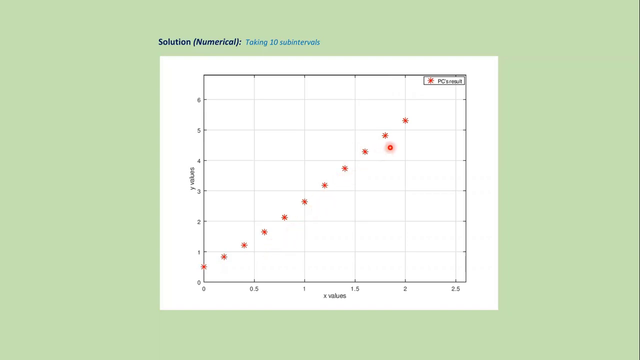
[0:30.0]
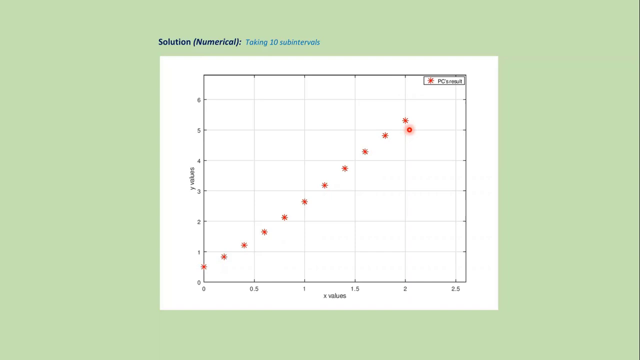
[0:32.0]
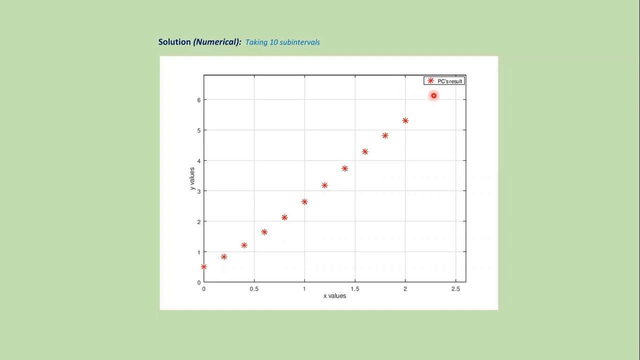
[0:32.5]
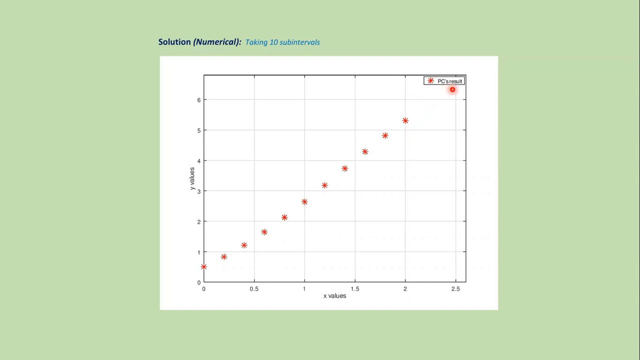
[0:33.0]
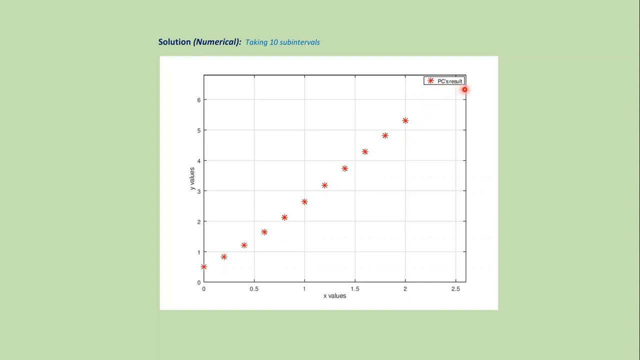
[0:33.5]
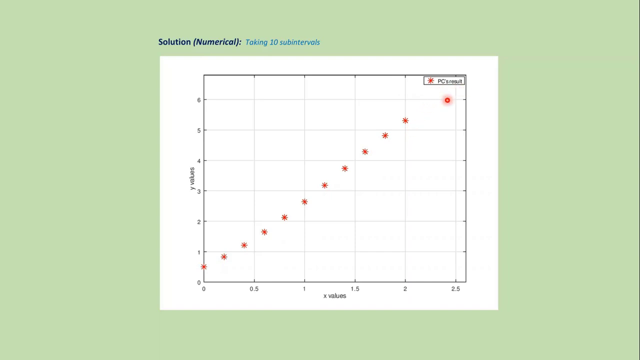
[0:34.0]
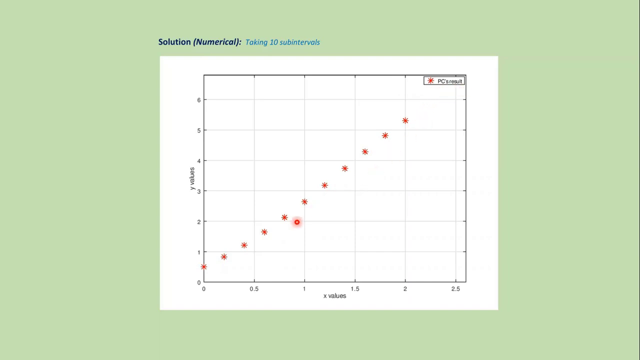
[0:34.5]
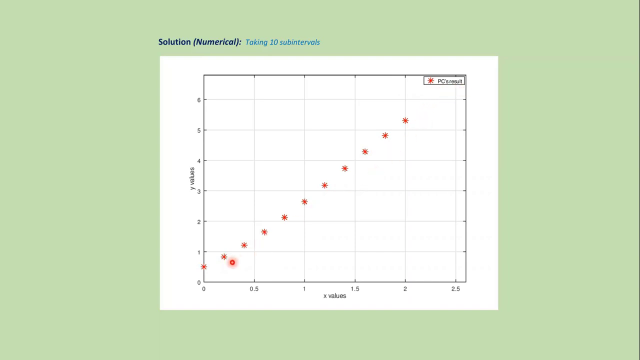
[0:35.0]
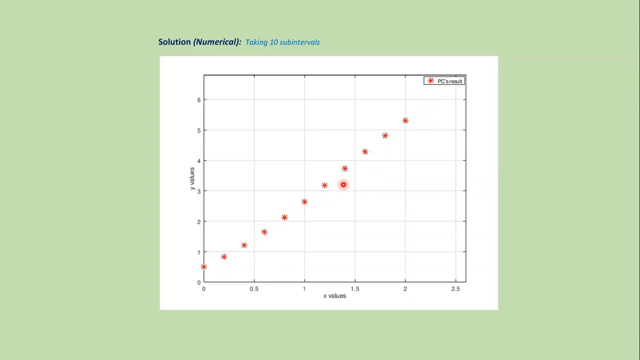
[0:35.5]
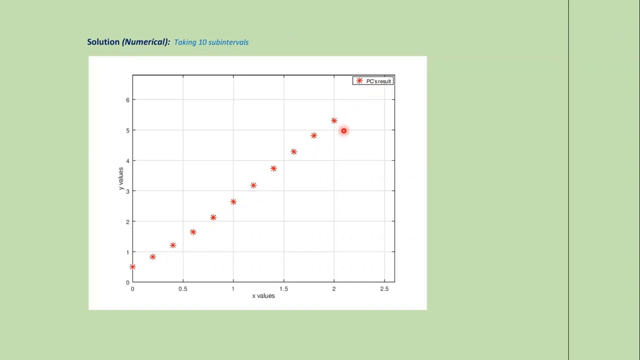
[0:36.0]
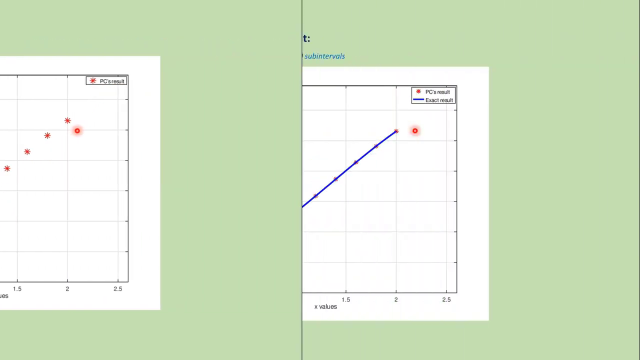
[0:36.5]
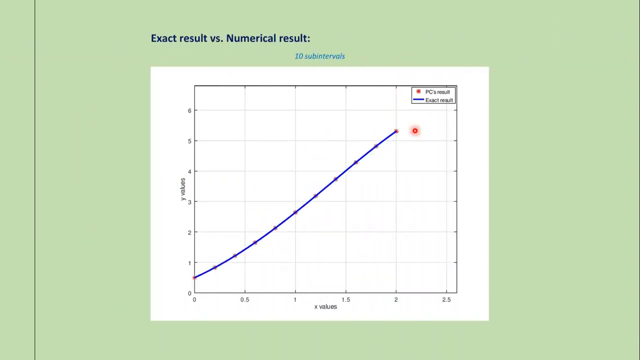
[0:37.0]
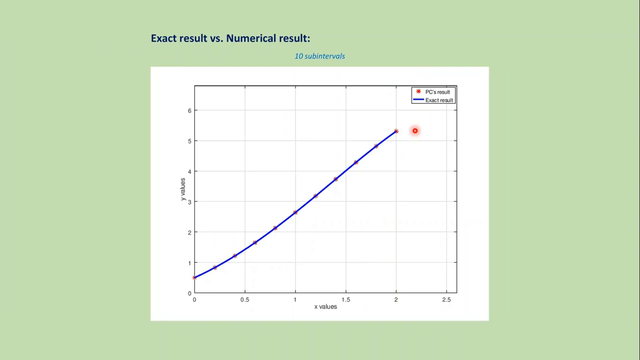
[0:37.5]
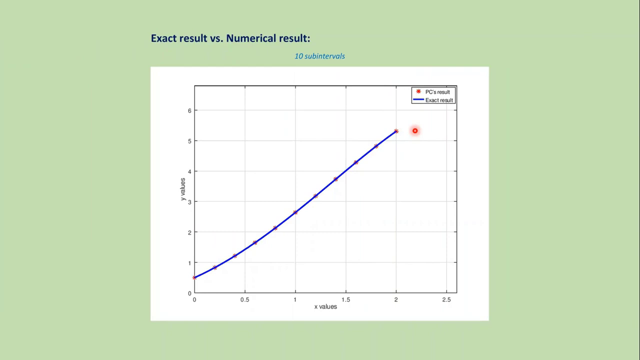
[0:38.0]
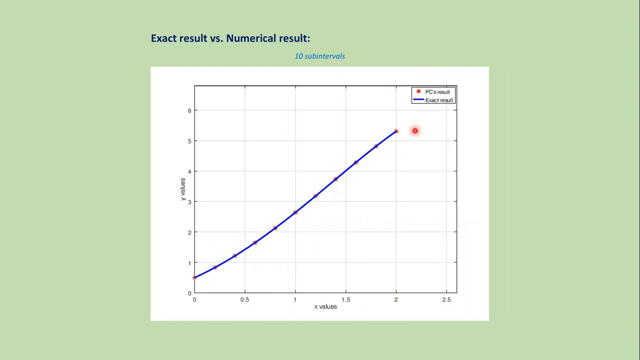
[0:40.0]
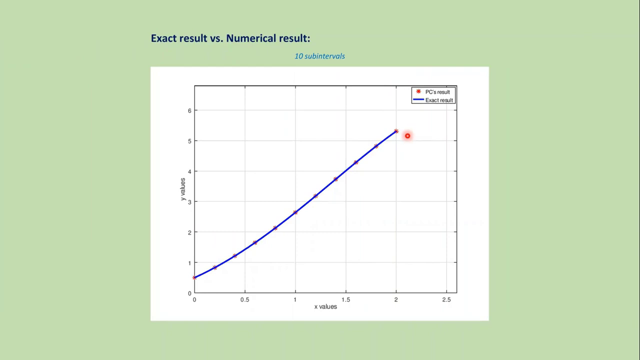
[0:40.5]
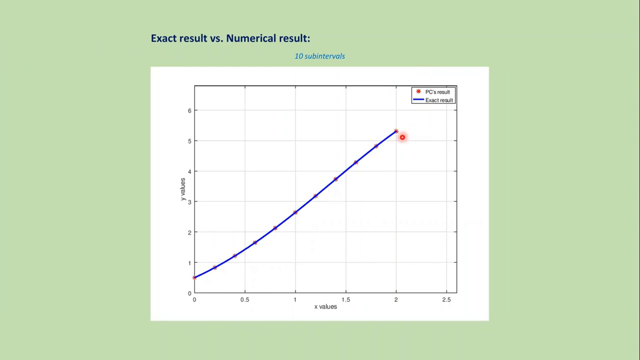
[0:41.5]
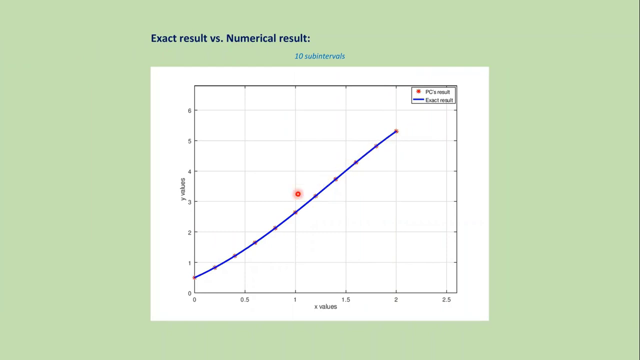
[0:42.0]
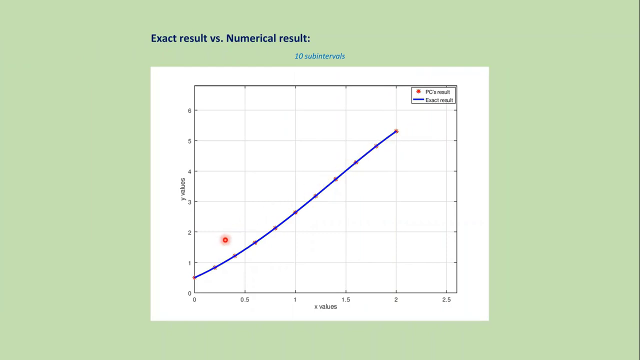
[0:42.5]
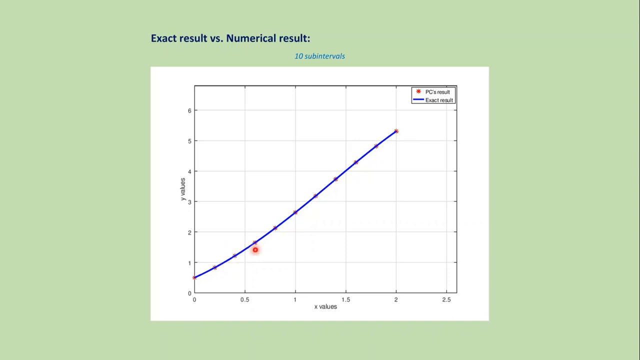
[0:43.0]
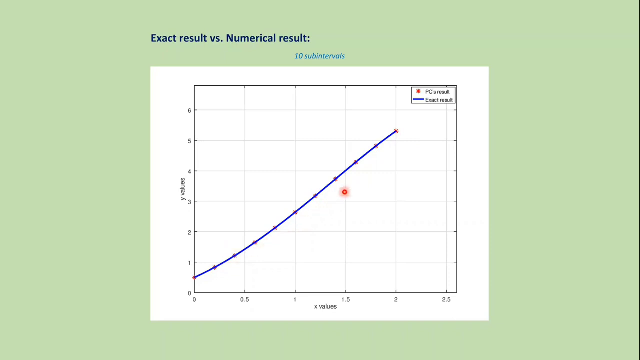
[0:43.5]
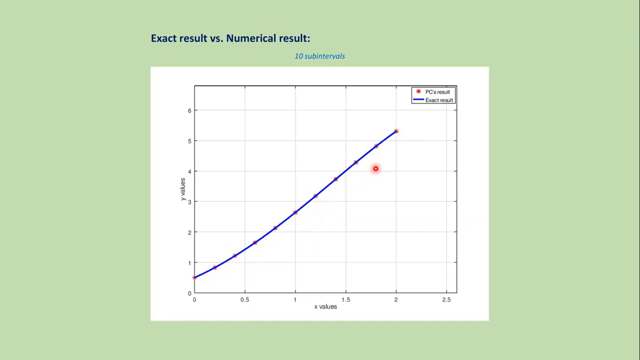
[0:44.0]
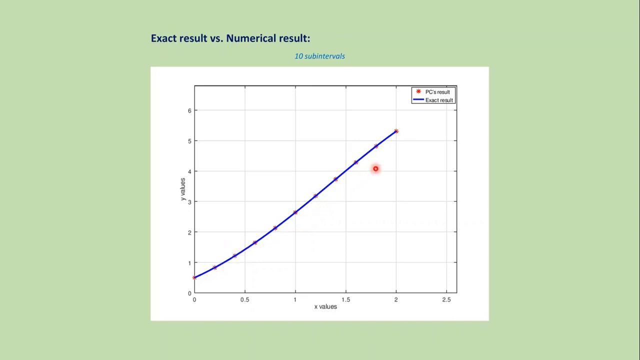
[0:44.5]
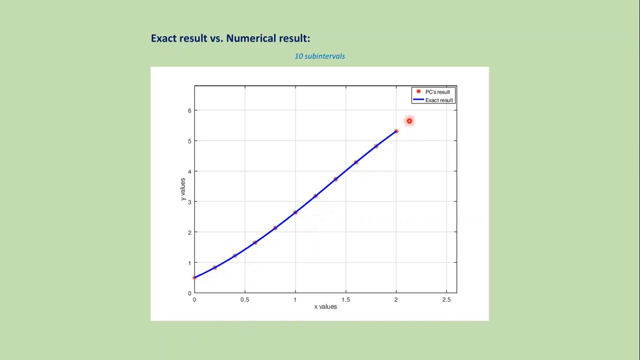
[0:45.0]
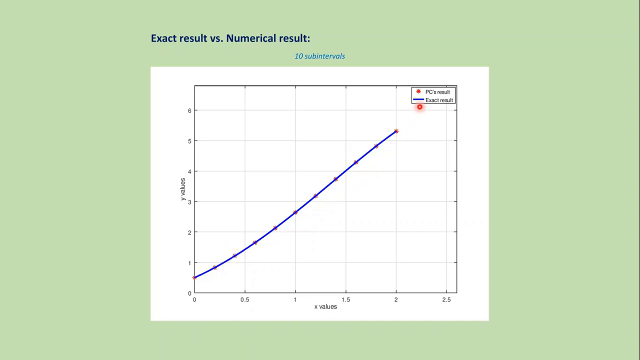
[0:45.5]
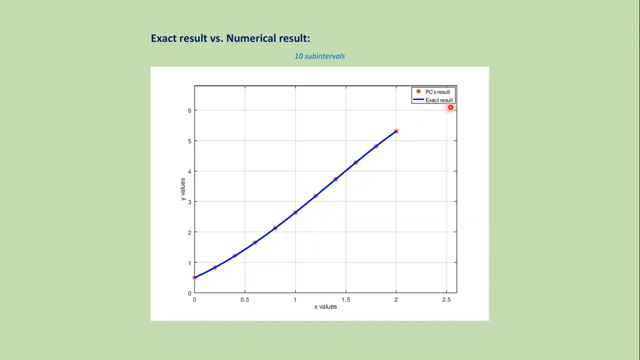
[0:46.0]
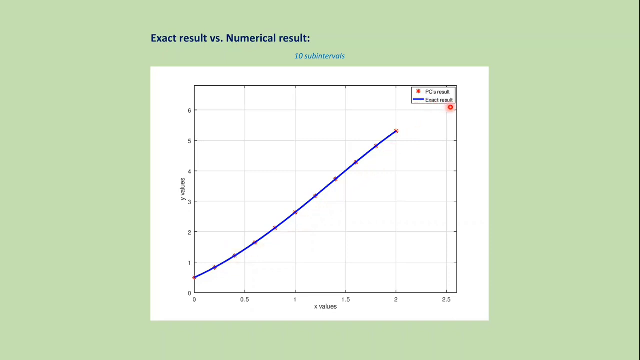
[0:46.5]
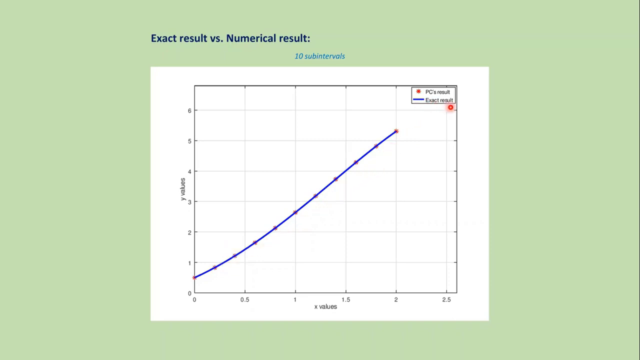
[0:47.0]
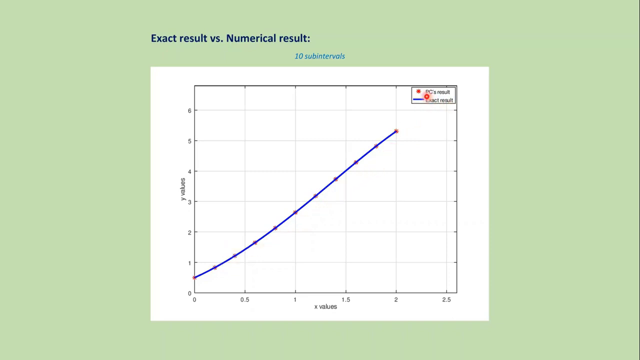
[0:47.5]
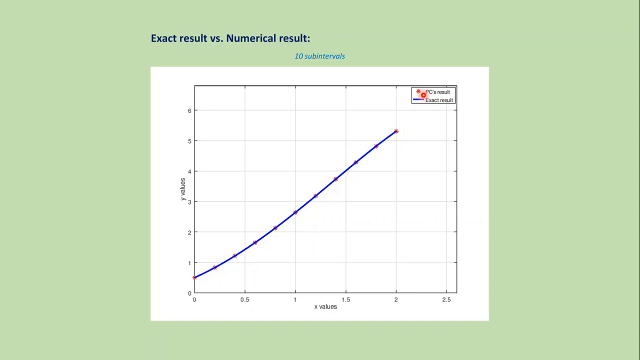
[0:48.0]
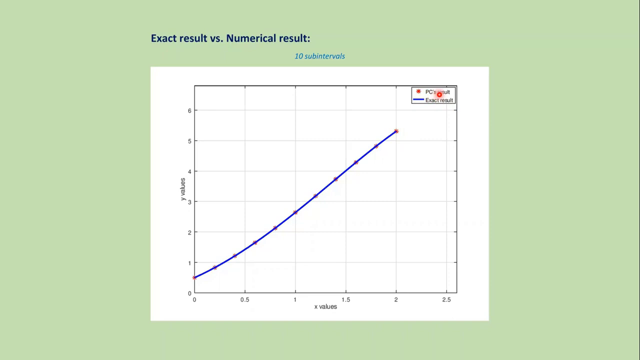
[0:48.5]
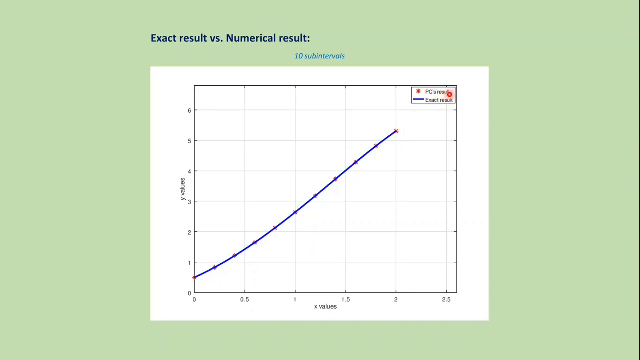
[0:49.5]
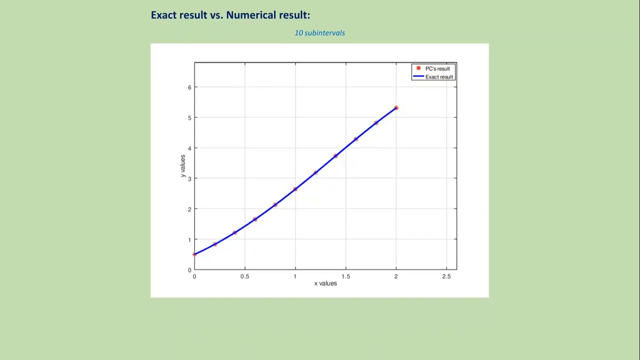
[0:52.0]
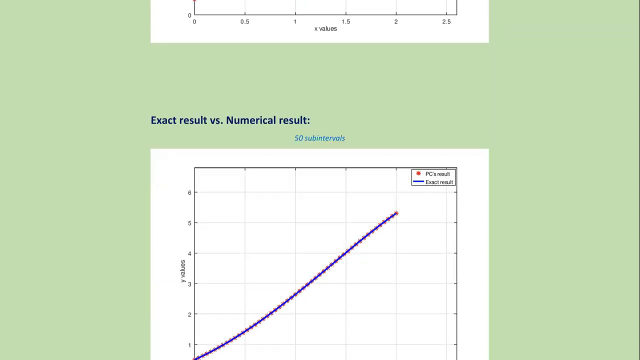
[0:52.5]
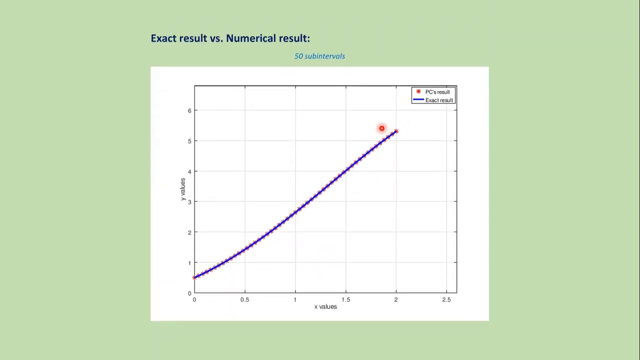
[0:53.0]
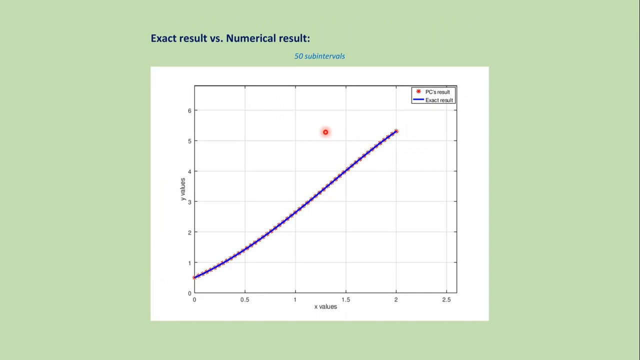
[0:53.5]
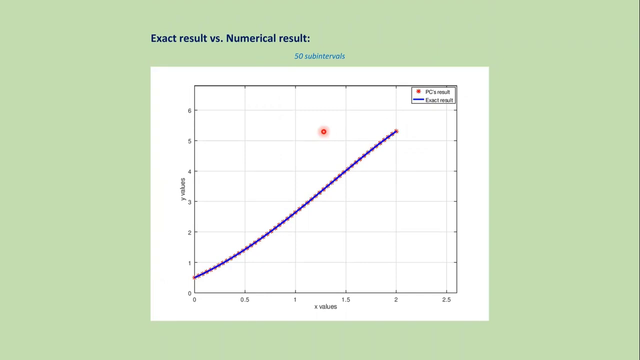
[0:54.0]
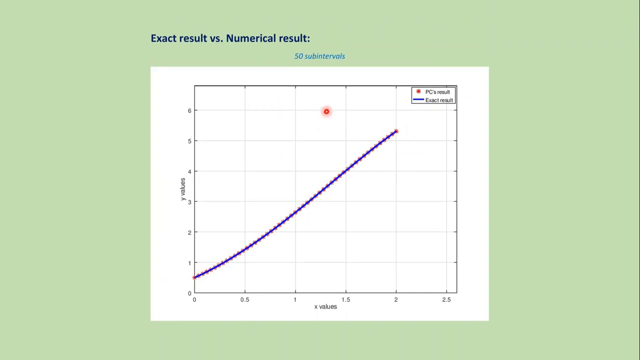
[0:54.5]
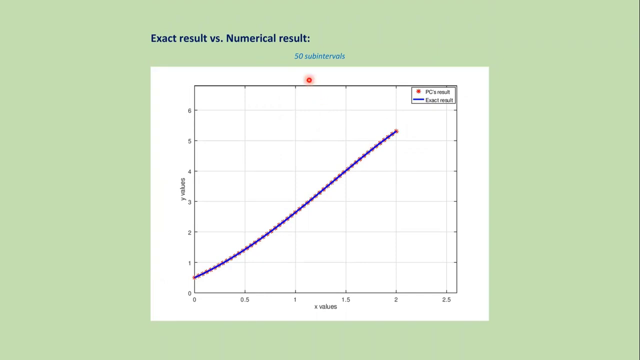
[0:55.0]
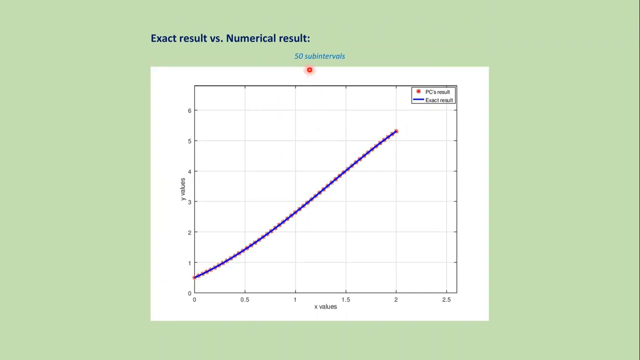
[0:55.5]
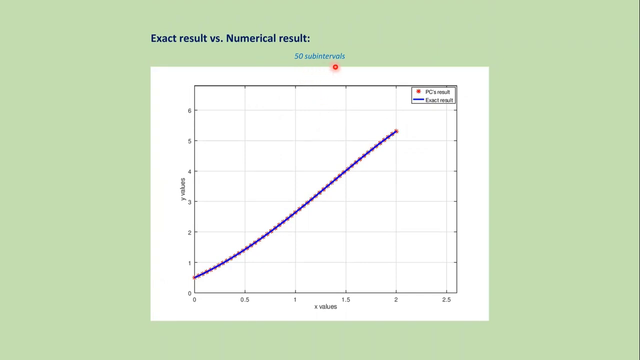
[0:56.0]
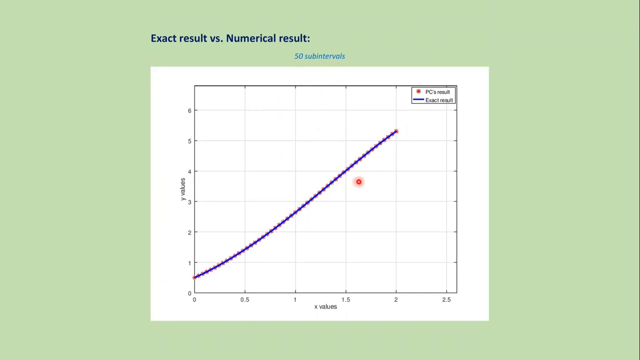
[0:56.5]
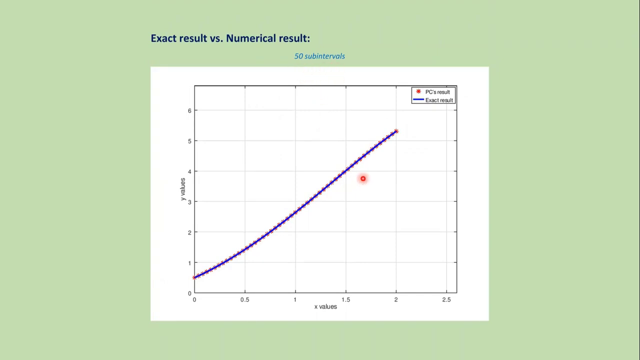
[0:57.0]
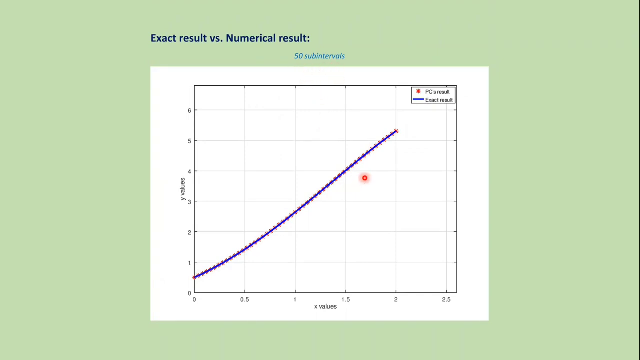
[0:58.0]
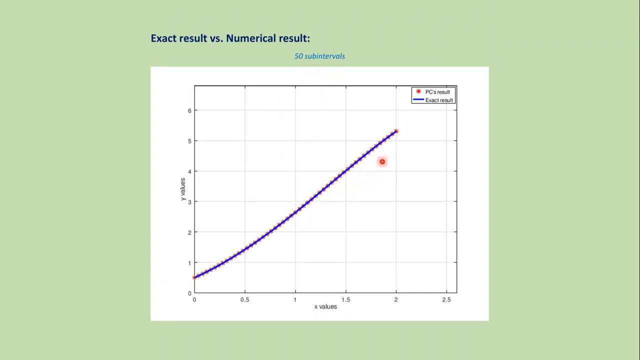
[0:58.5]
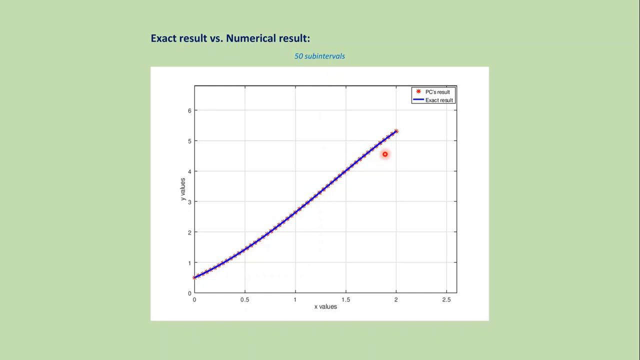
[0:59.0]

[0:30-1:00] A math chart is shown while a red laser pointer moves around the page the entire time, pointing out different areas of the chart. At one point the chart has red dots going up from the lower left to the upper center, and a blue line has been drawn in between those red dots; the laser pointer shows the dots and the blue line that connects them. The final image is the blue line with several blue dots going up through it, a red dot at the lower left where the line begins, and another red dot in the upper part, past the center. The page title says "exact result versus numerical result," and there are 50 subintervals. A small chart in the upper right corner of the chart shows a red dot and a red line with words explaining what they are.